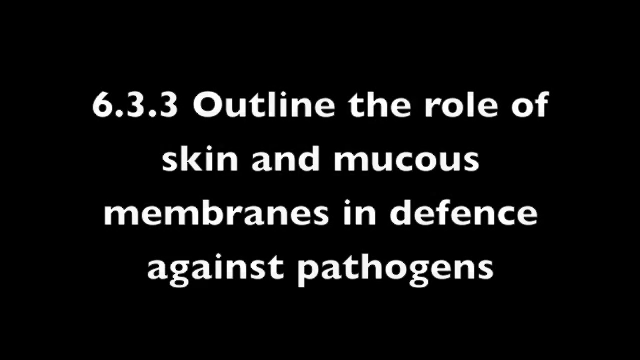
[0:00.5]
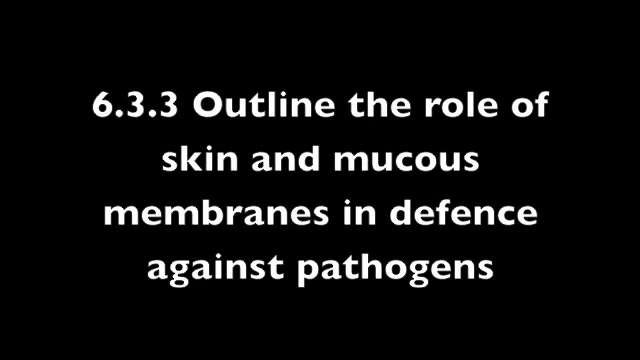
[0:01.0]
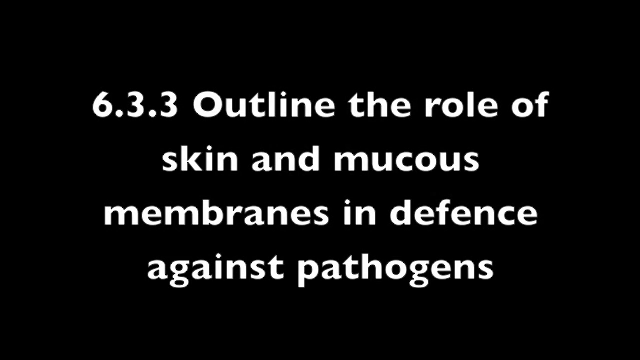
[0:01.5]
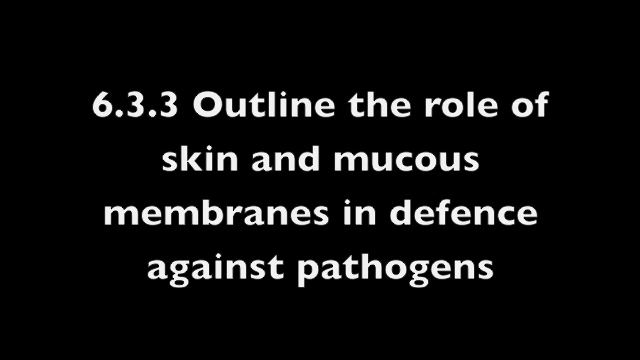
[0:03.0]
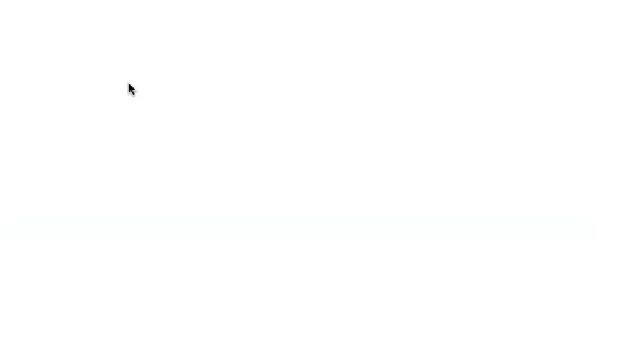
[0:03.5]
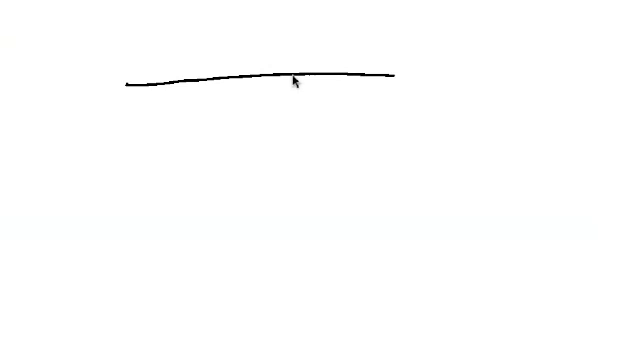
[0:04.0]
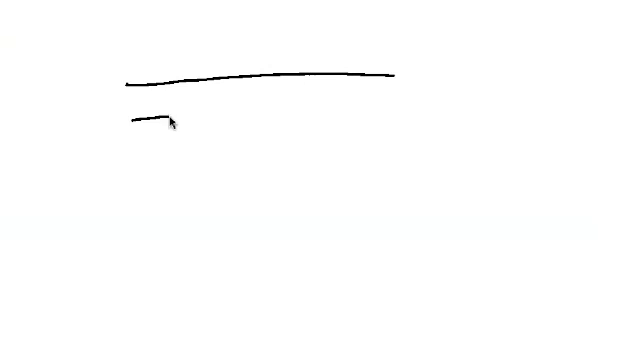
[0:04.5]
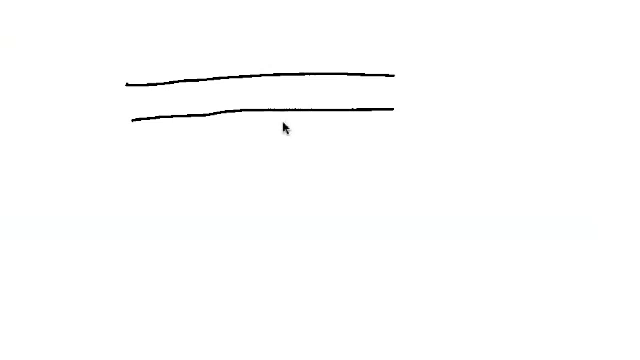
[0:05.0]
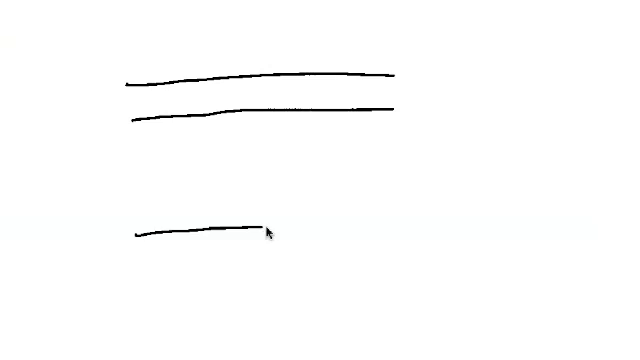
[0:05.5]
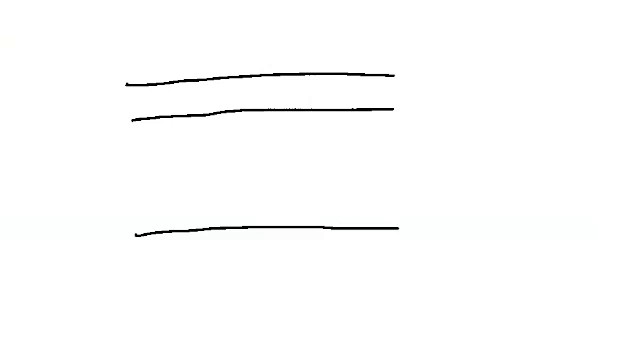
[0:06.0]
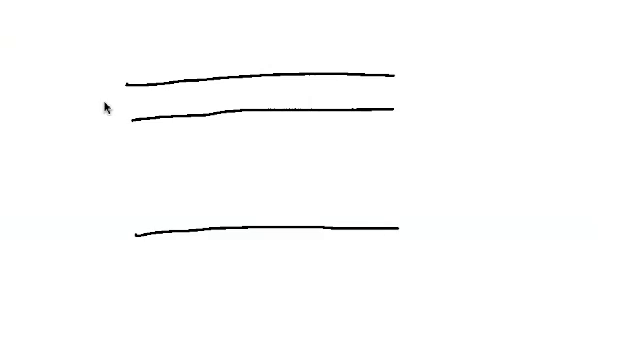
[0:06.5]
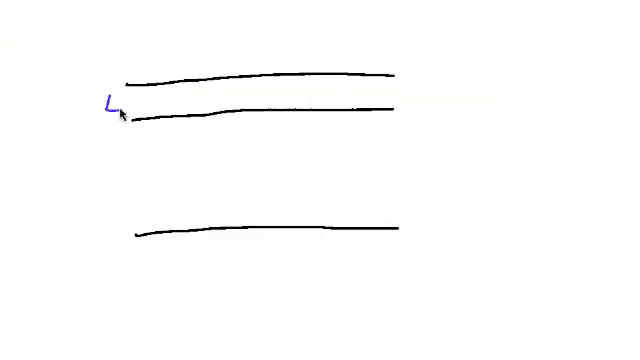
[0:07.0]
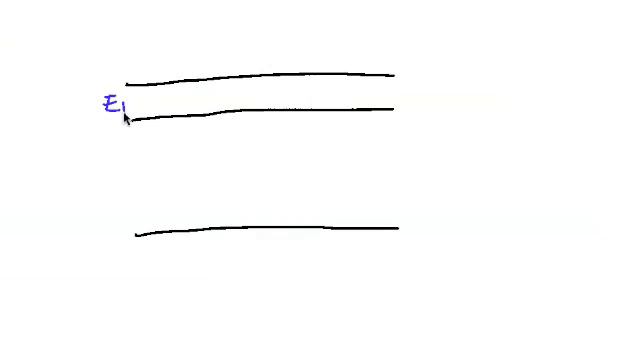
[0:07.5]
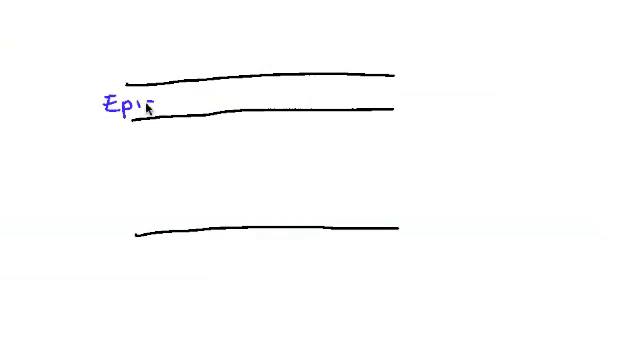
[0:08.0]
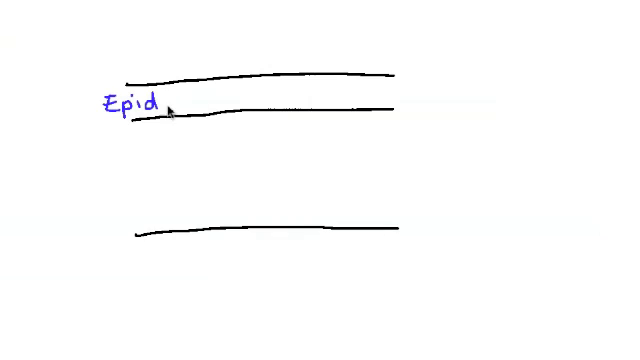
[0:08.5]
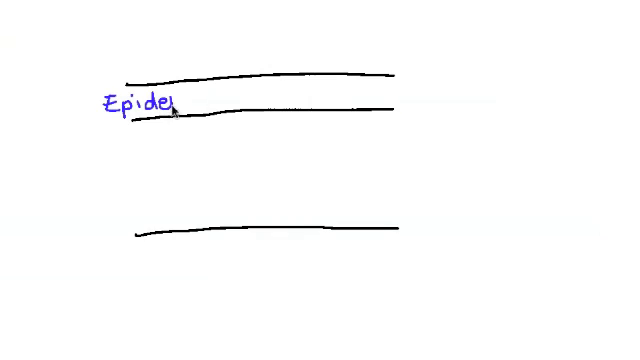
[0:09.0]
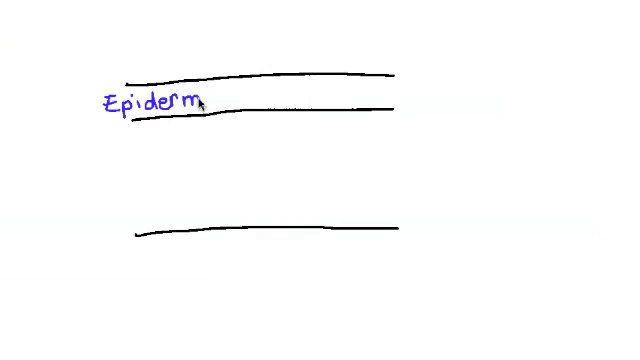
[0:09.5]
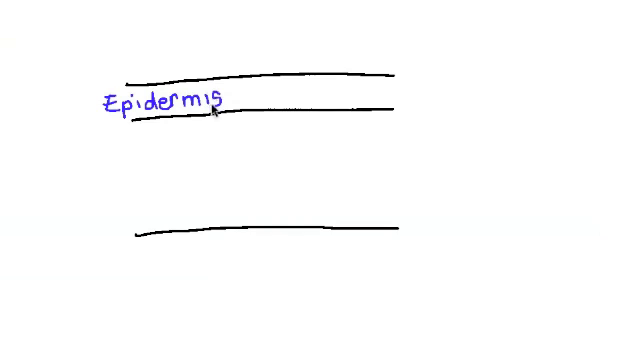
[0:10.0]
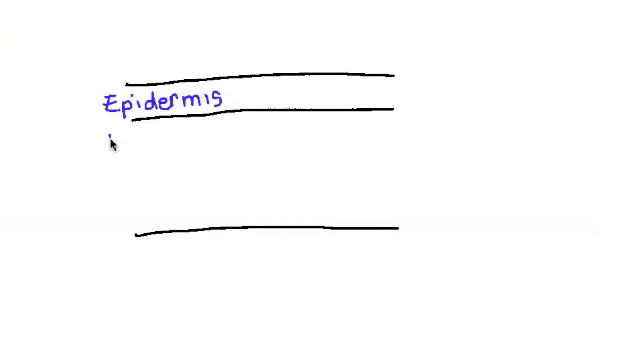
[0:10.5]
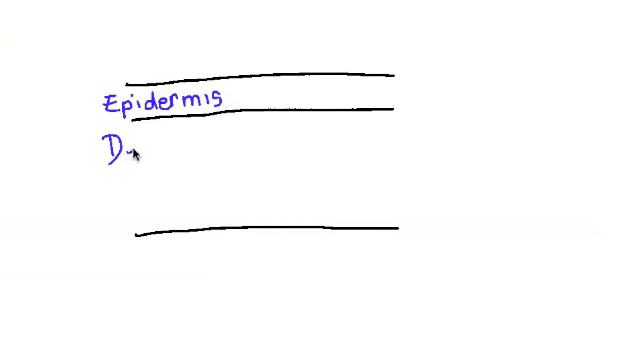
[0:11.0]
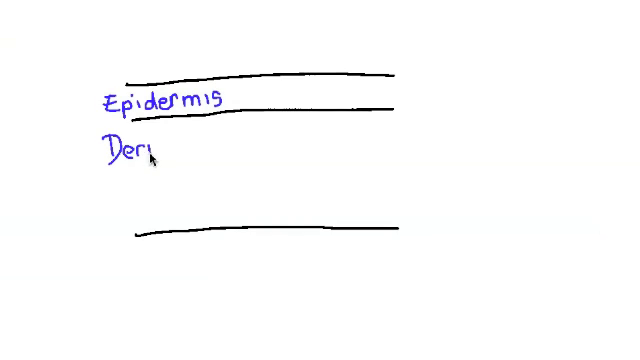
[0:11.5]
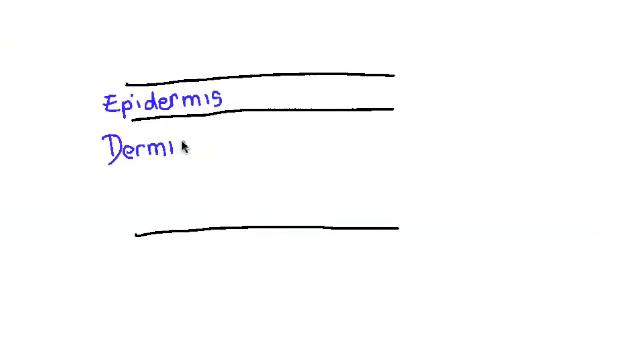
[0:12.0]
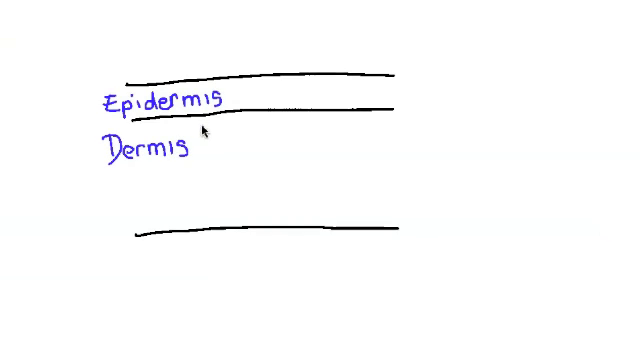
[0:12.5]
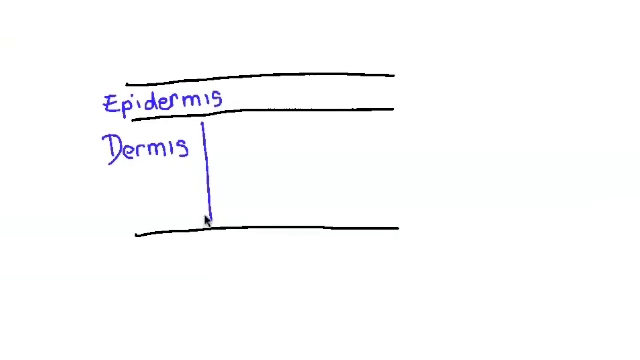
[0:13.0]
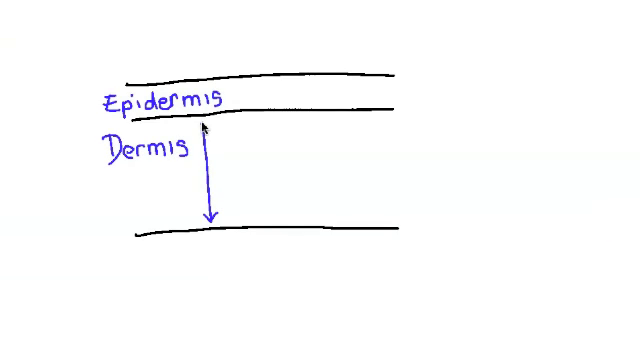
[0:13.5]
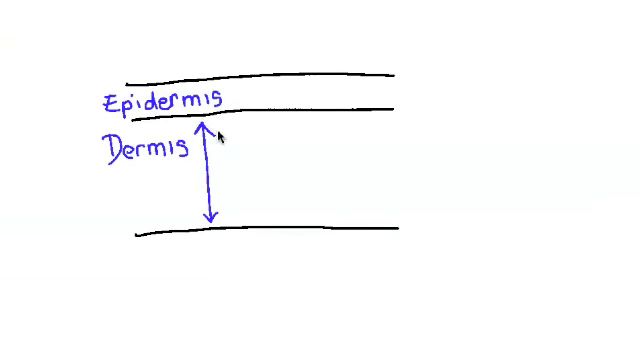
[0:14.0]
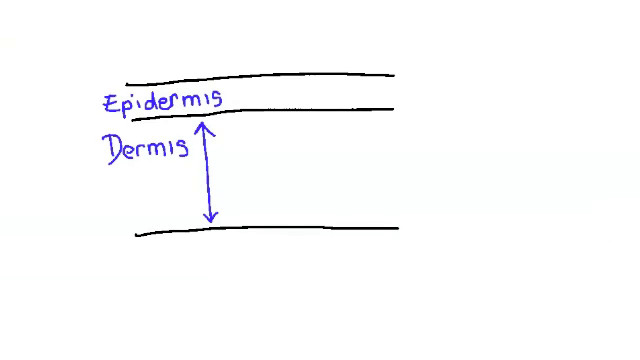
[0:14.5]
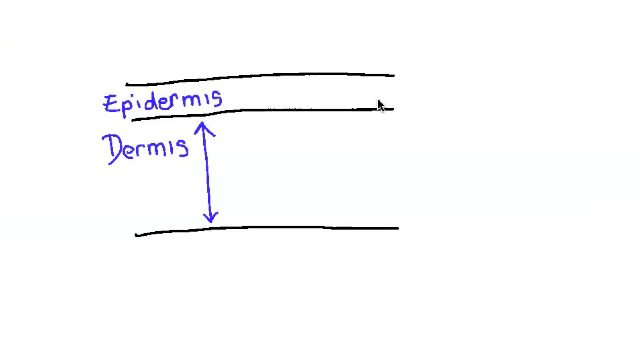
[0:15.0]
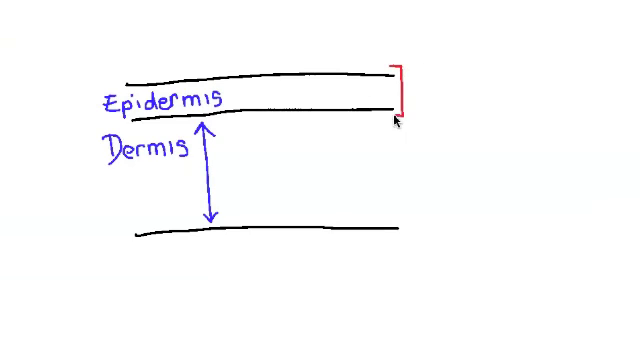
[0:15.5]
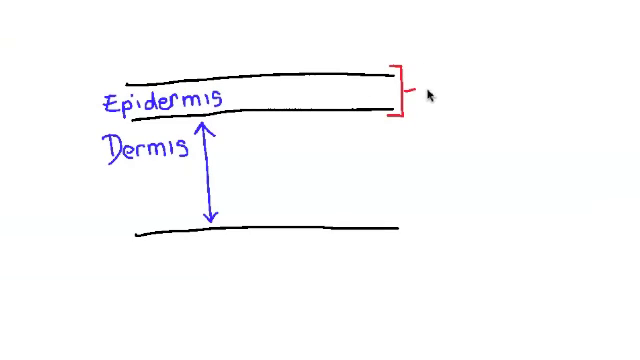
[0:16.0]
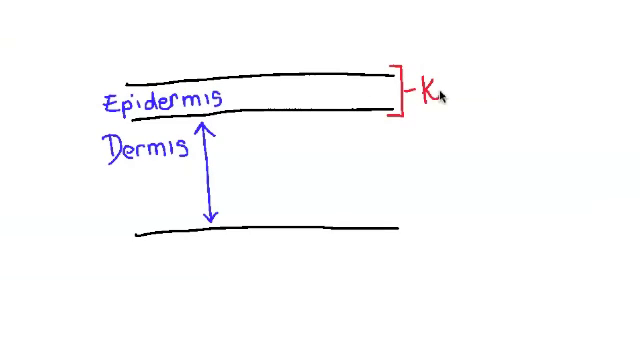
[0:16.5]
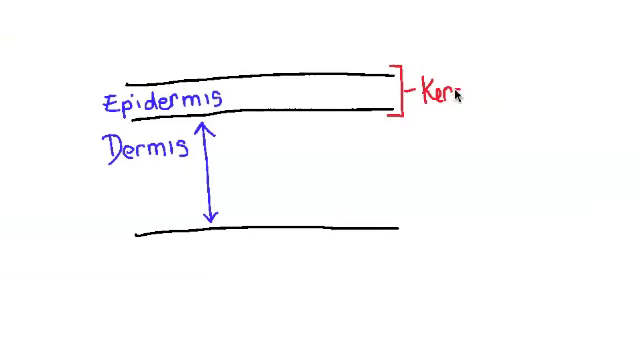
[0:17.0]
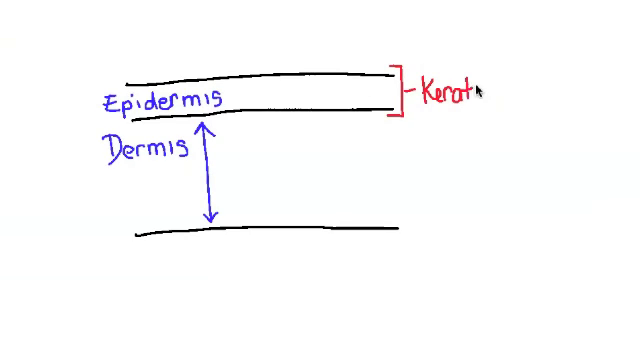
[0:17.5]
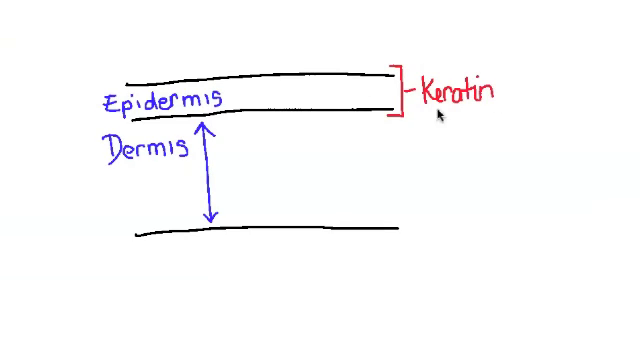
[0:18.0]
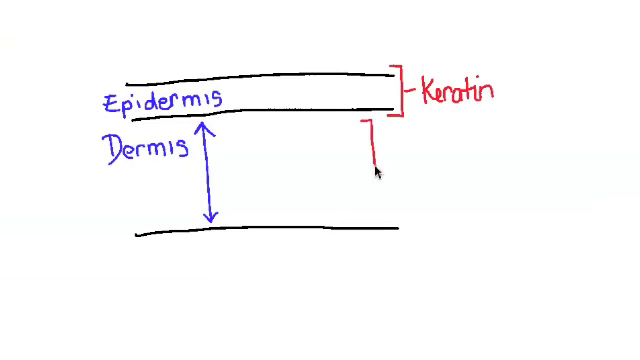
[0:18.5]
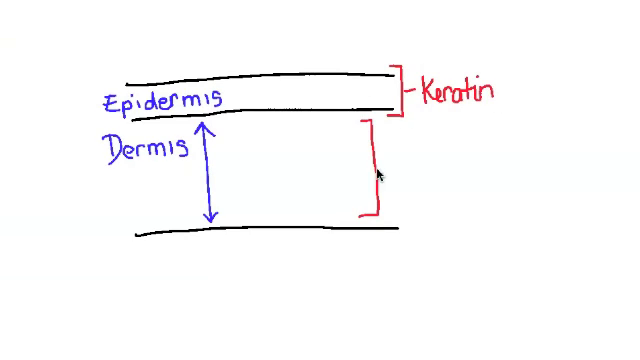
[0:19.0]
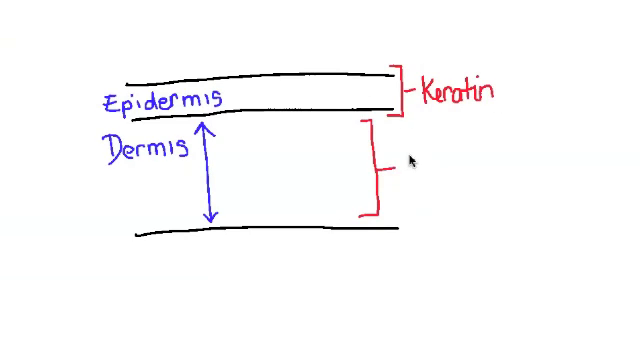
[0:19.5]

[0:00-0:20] White text on a black background, in the center of the screen, reads "6.3.3, outline the role of skin and mucous membranes in defense against pathogens." It appears to be a textbook title or learning goal. The screen transitions to a white background where a live drawing is made with the mouse cursor in black. "Epidermis" is written in purple ink at the top layer, and "dermis" is written underneath, with a double-ended arrow marking the second portion of the skin. On the right side, "keratin" is written in the section bracketed by Epidermis, and a second bracket begins to be drawn for the dermis section. It appears to be an annotated, drawing-style educational video.